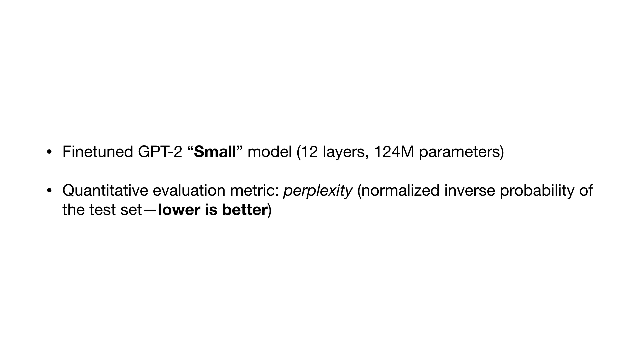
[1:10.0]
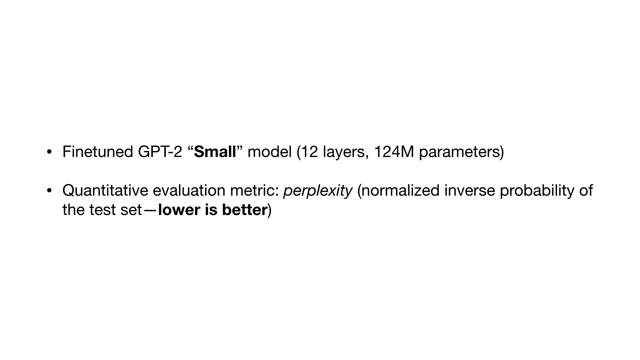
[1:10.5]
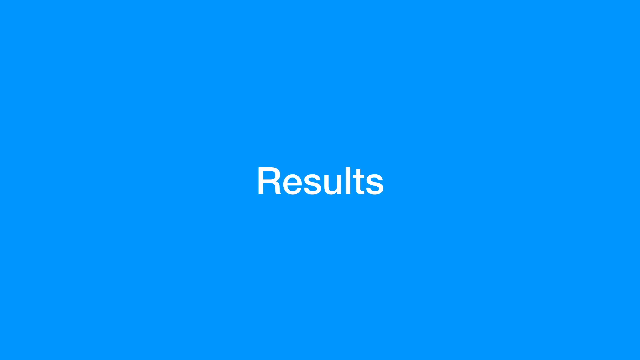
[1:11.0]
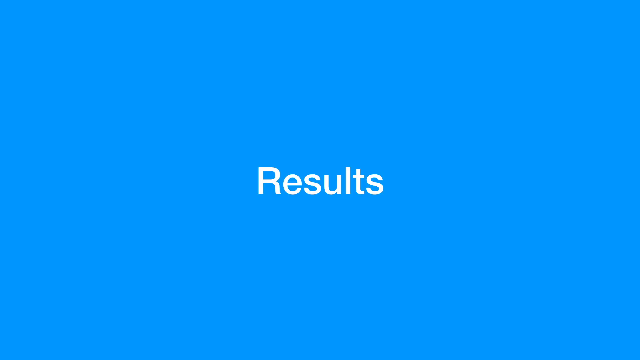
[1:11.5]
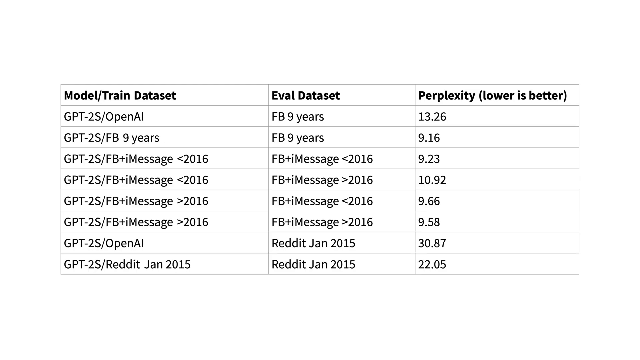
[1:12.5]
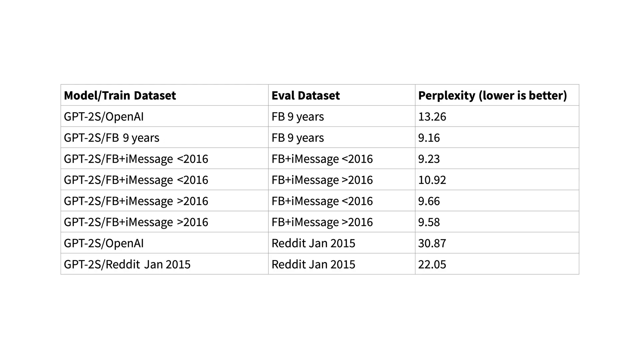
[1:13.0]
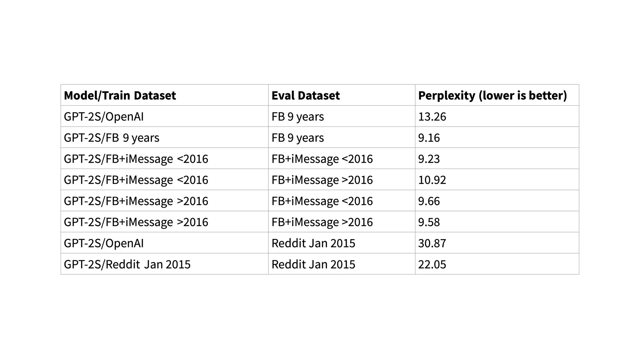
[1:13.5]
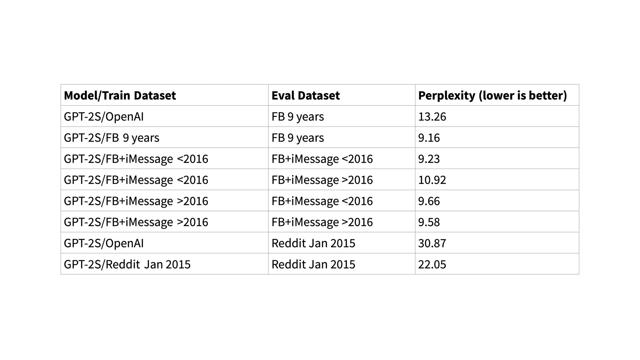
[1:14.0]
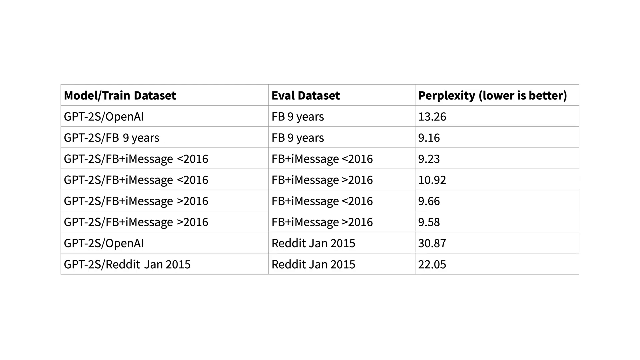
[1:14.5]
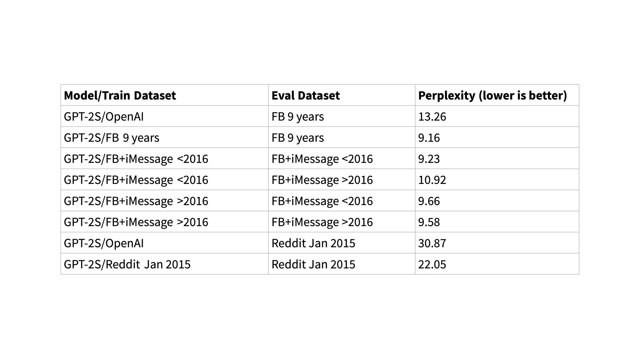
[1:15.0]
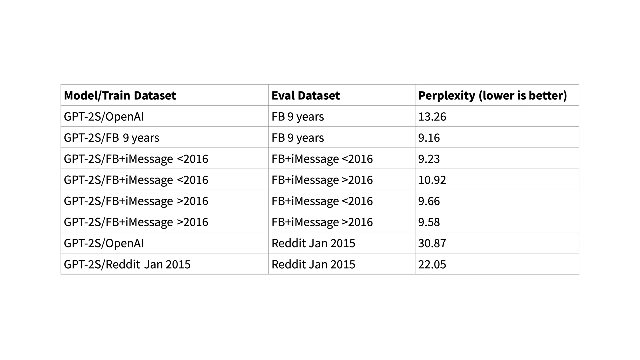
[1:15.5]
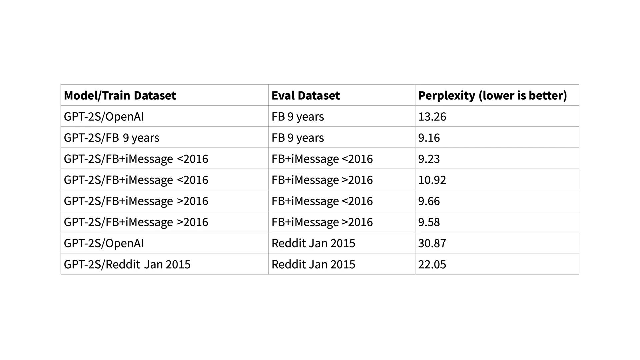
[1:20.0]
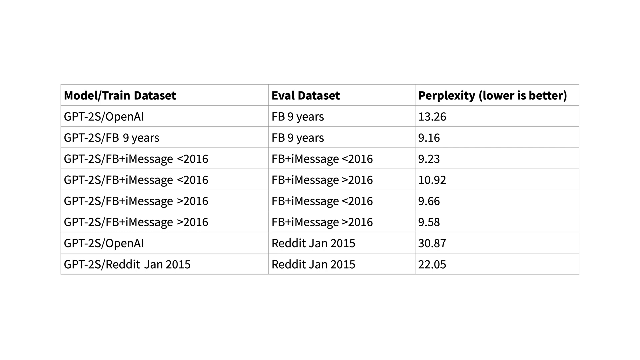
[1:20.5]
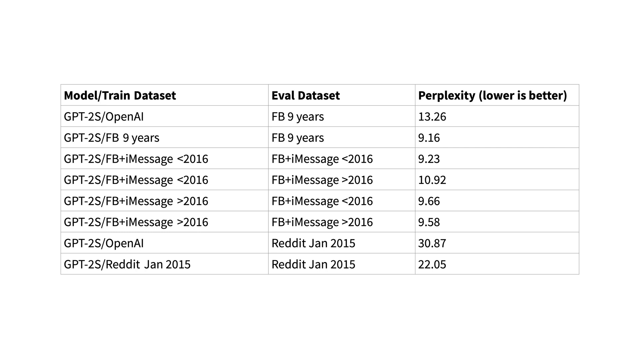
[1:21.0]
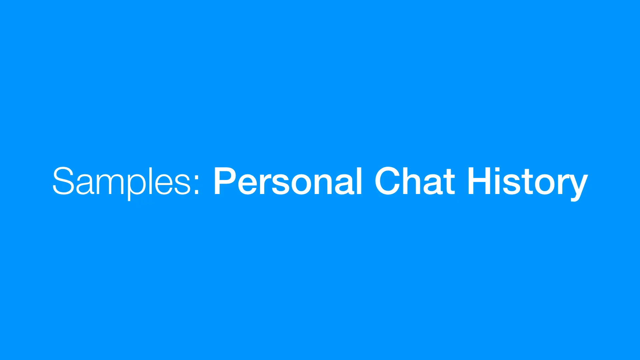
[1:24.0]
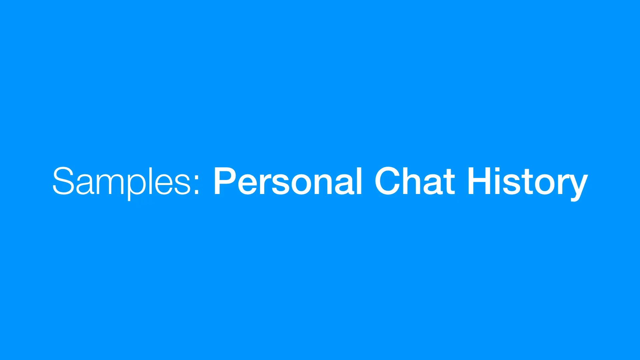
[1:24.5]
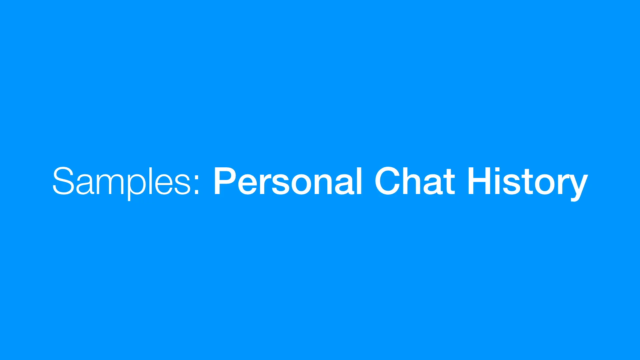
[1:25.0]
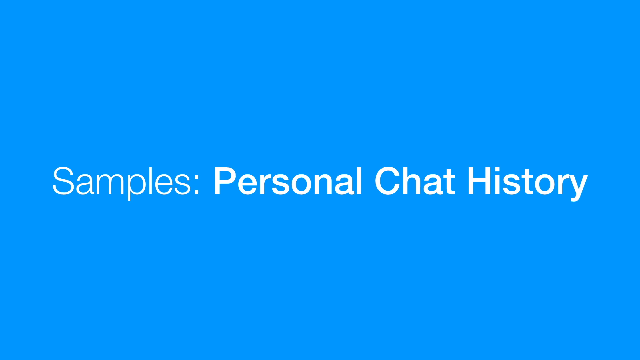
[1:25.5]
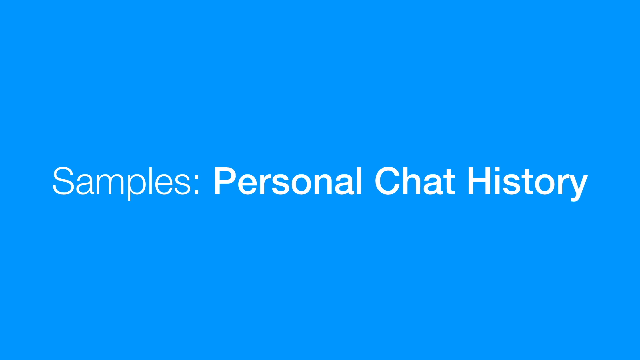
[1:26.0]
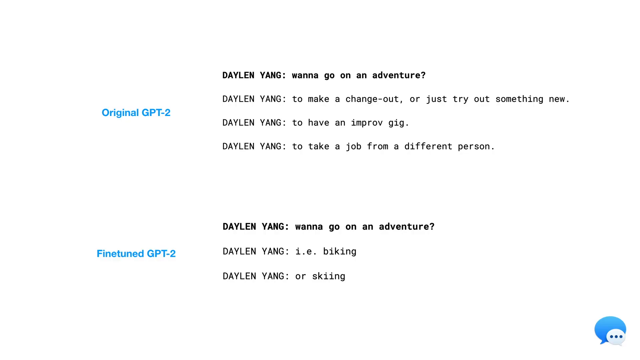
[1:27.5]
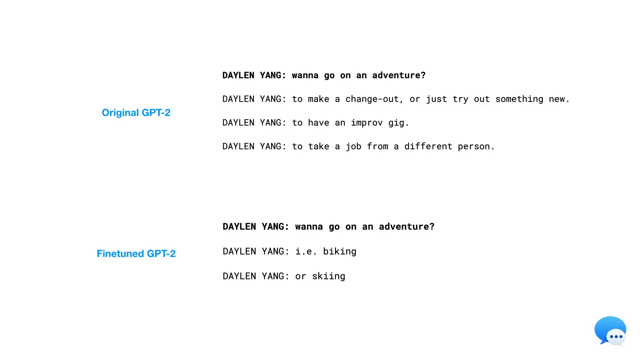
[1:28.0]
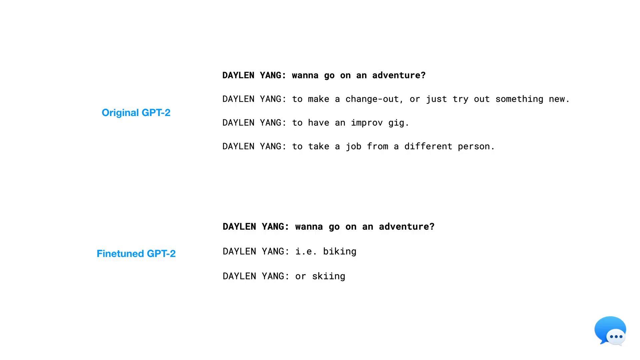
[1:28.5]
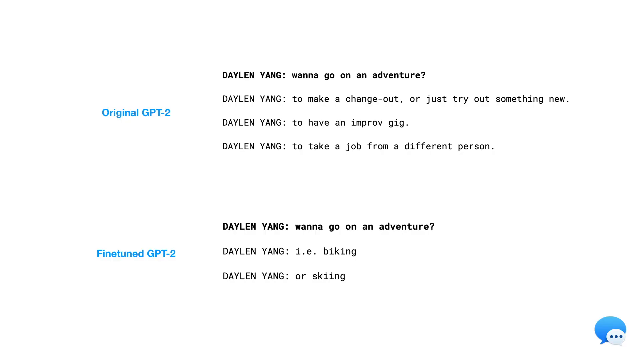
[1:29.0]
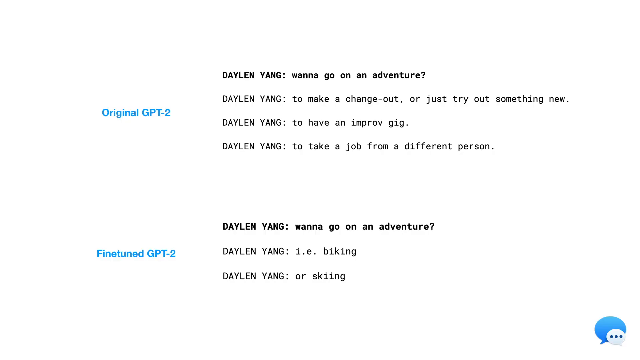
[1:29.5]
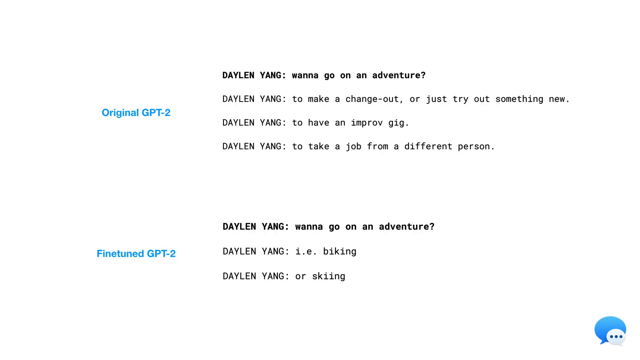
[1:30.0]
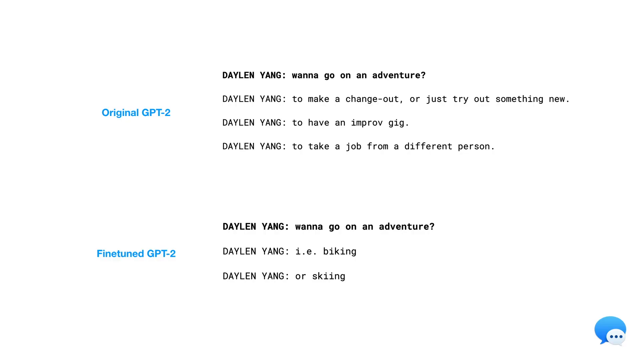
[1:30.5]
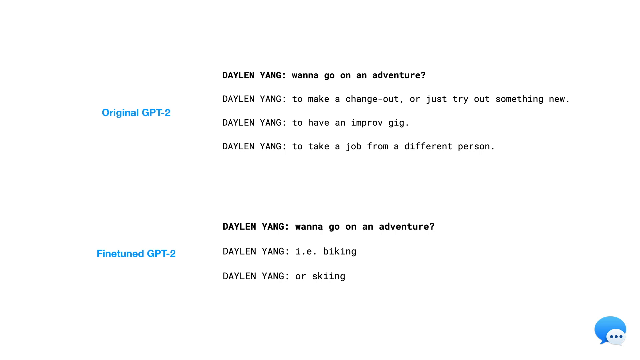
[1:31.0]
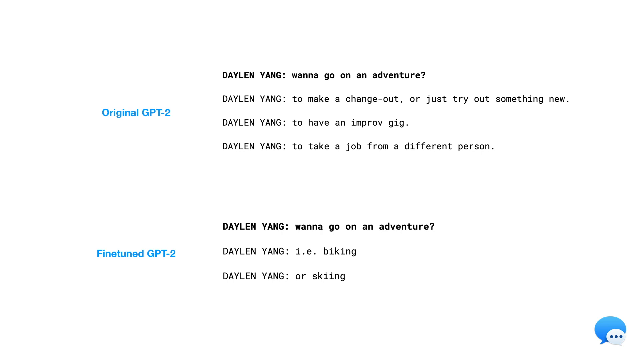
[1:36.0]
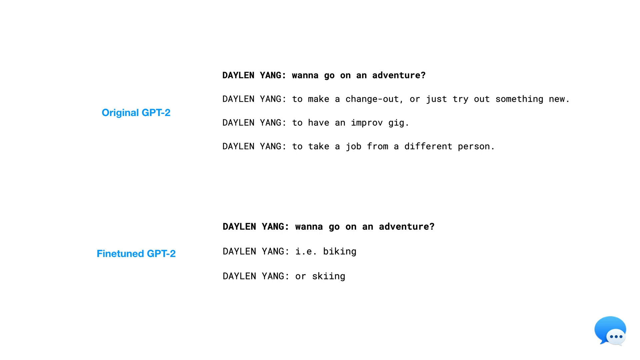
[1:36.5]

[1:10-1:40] A white slide reads "fine-tuned gpt-2 small model 12 layers 124m parameters," with part of it in parentheses, and underneath, "quantitative evaluation metric perplexity normalized inverse probability of the test set lower is better." The video then moves to a slide reading "results," followed by a white slide with a chart whose columns are model/train data set, eval data set, and perplexity (lower is better). It lists the data sets used, including OpenAI, Facebook from nine years, iMessenger from different years, OpenAI from Reddit, and Reddit itself, along with perplexity numbers. This chart stays up for about six or seven seconds, then the video cuts to a screen reading "samples personal chat history." After a couple of seconds a white screen shows the original GPT-2, with messages from Dylan Yang asking whether it wants to go on an adventure, and the fine-tuned GPT-2, where Dylan Yang asks the same thing. This screen, showing a short chat history, stays up for a while.